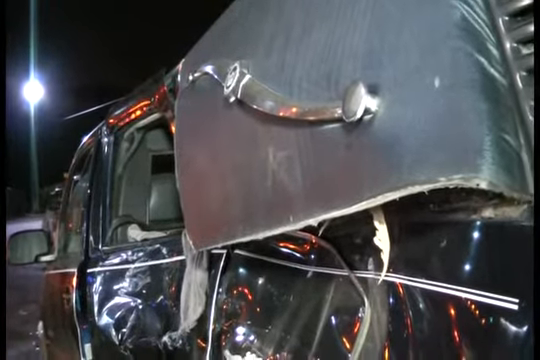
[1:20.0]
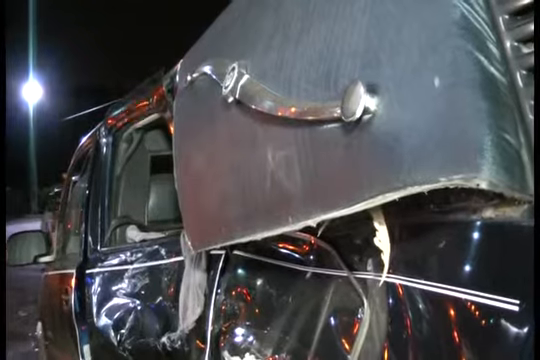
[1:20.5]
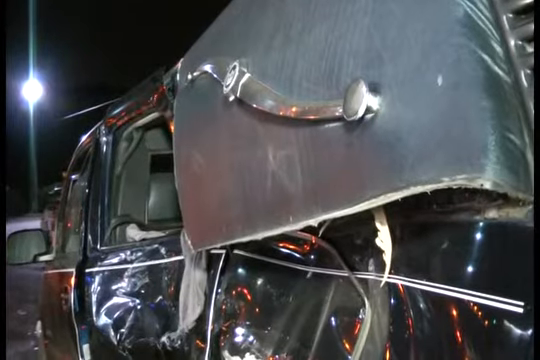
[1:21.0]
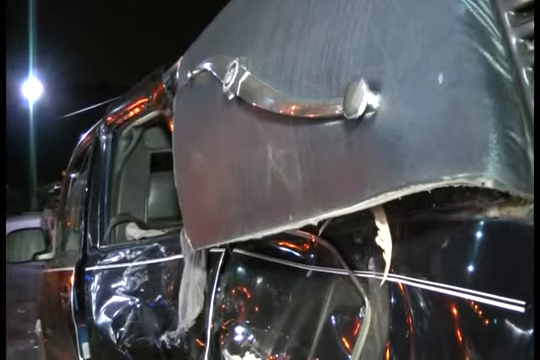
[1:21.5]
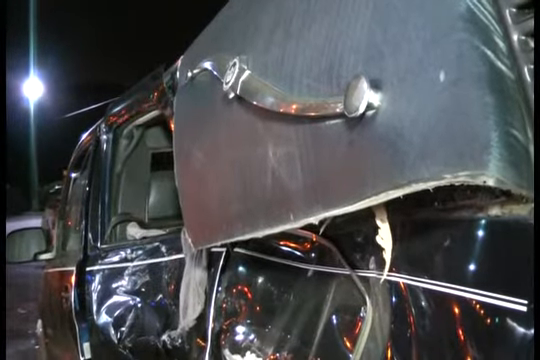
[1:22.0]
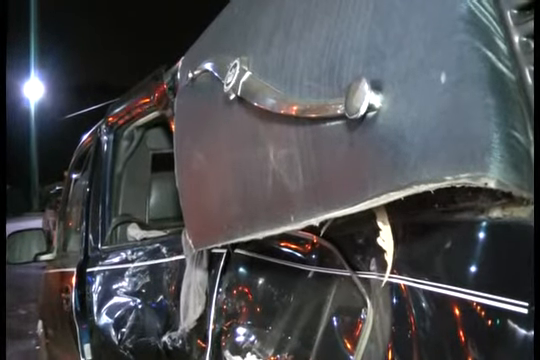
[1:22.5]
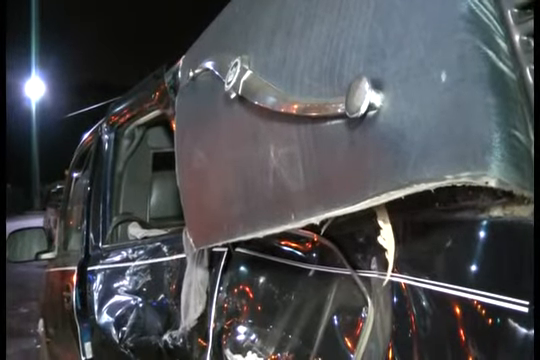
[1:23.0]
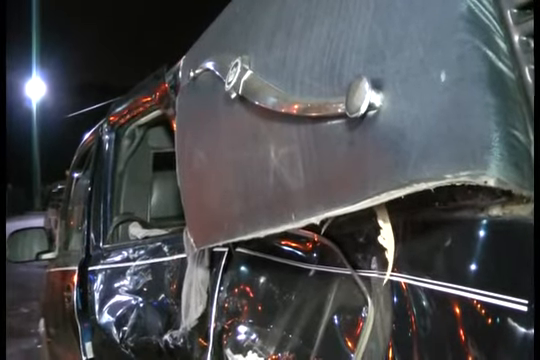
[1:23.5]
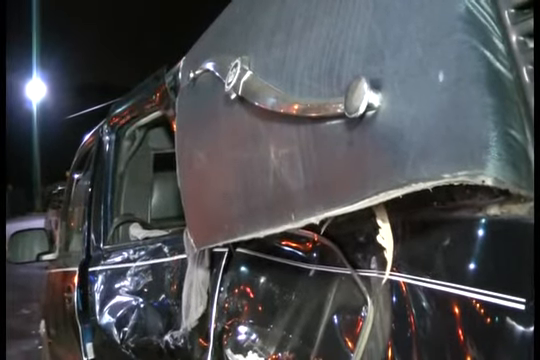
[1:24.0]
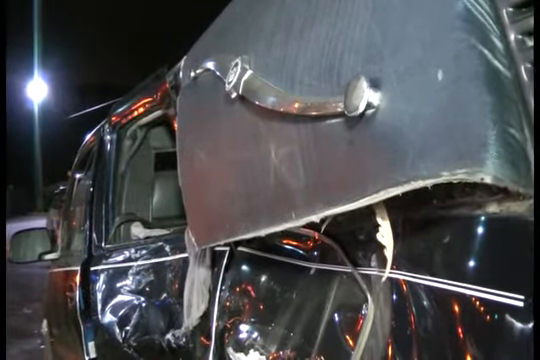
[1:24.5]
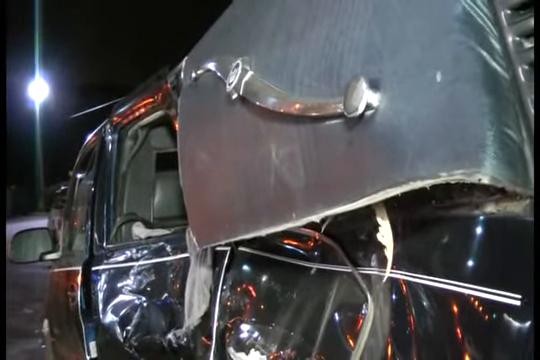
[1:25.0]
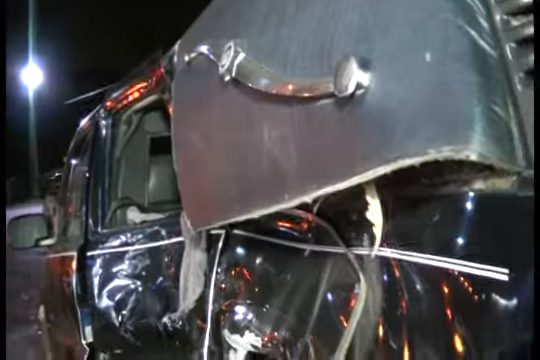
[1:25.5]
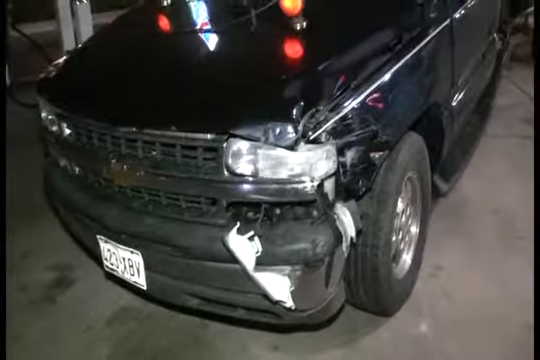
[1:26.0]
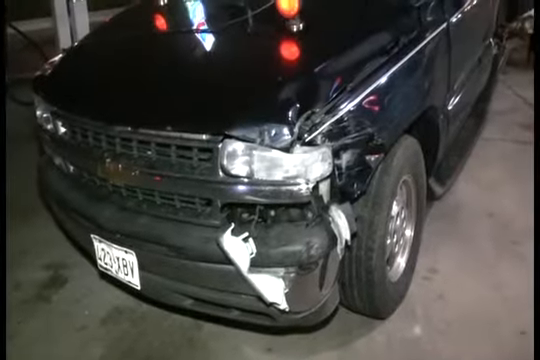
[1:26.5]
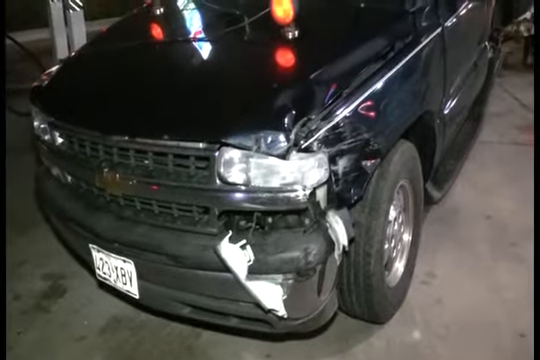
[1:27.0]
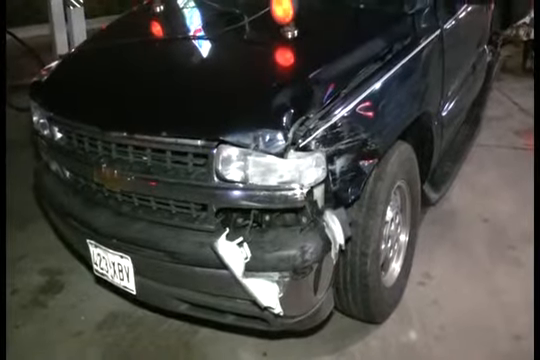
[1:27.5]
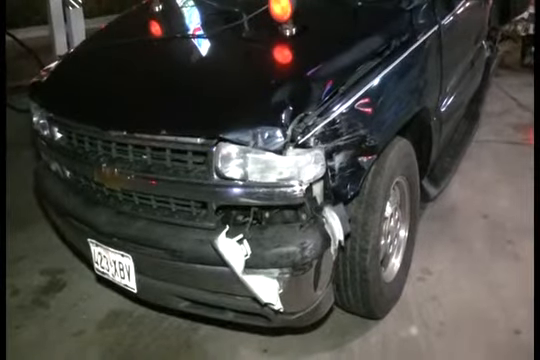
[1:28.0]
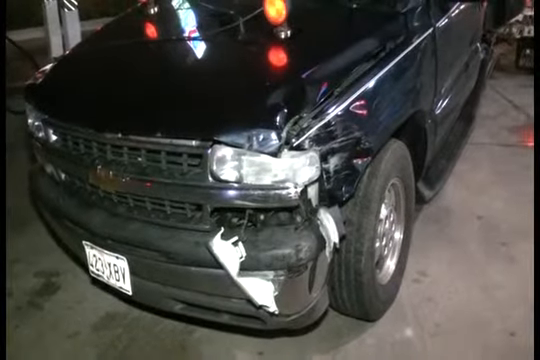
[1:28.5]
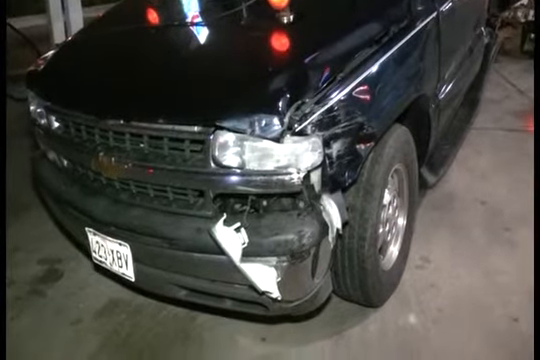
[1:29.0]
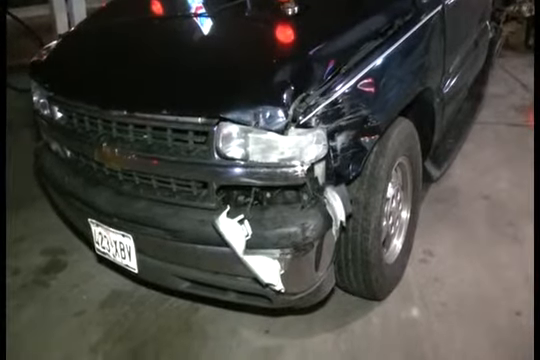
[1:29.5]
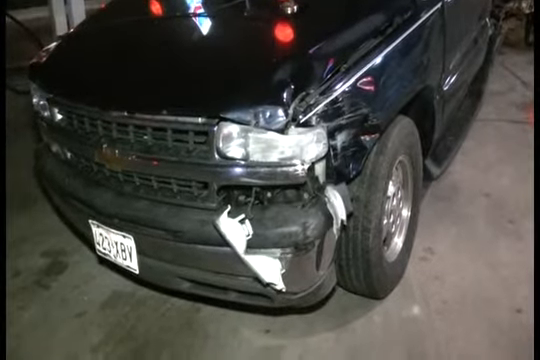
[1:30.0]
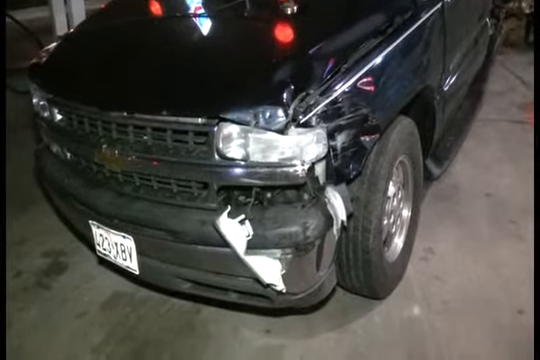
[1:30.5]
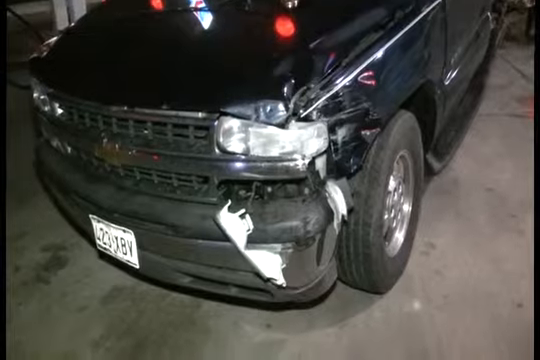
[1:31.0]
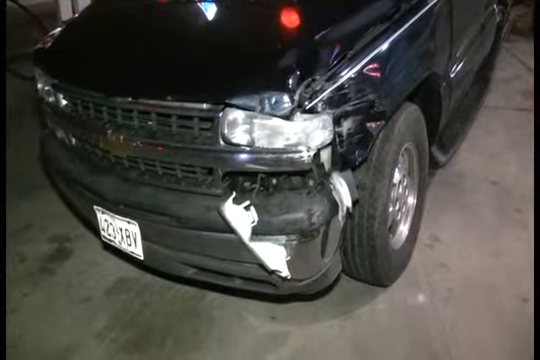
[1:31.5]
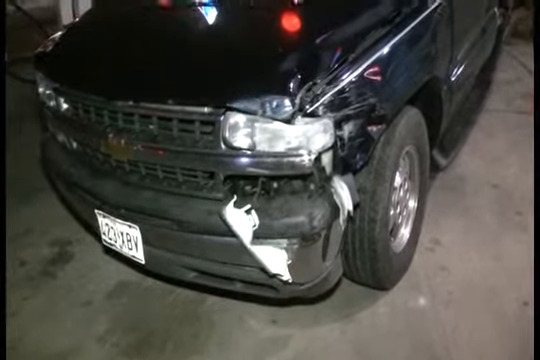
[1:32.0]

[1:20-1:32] A black vehicle that has been in an accident is seen from a rear angle at night. Straight ahead a street light is on, and reflections of twinkling red lights appear on the surface of the car. The video cuts to another angle of the same black vehicle, a close-up from the front. There is a dent on the left side of the hood and a dent on the headlight, with some white objects dangling from the headlight.